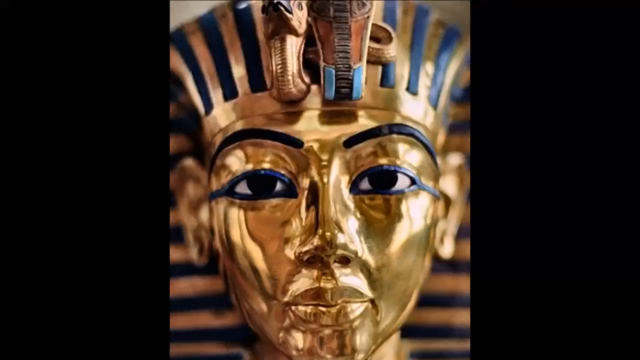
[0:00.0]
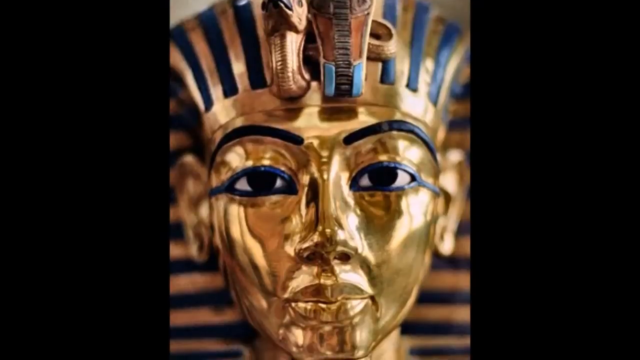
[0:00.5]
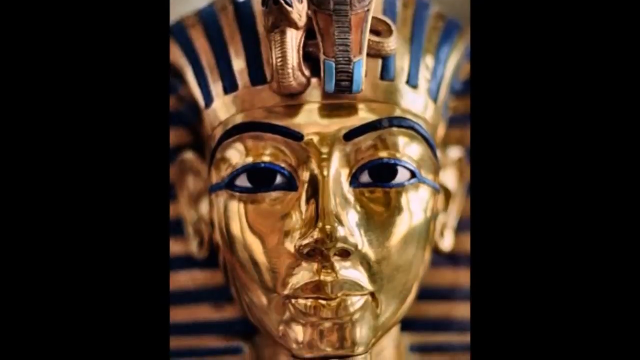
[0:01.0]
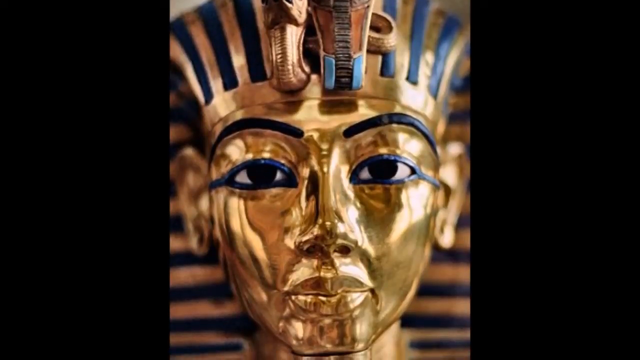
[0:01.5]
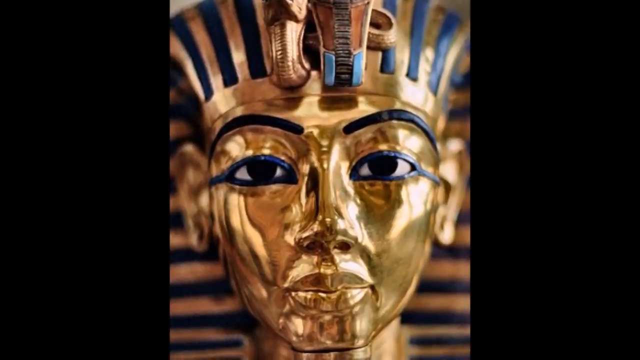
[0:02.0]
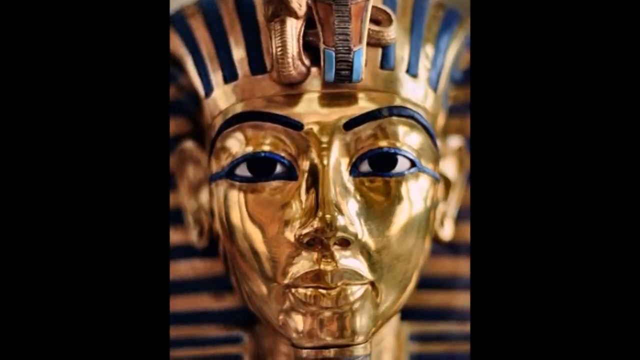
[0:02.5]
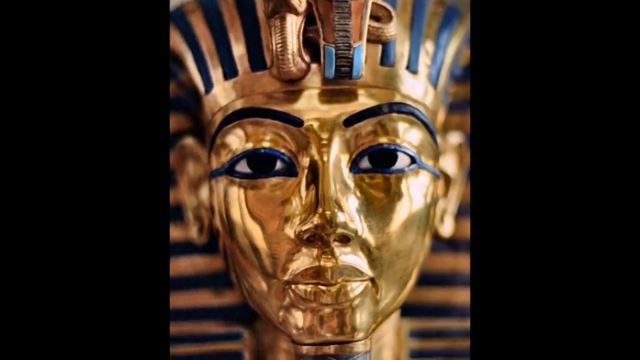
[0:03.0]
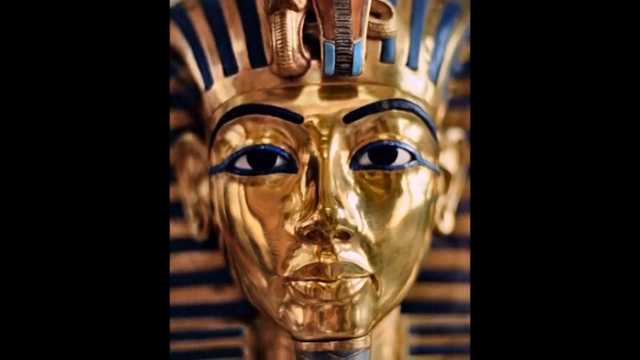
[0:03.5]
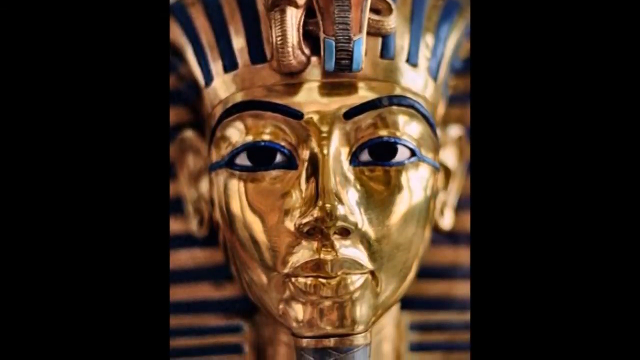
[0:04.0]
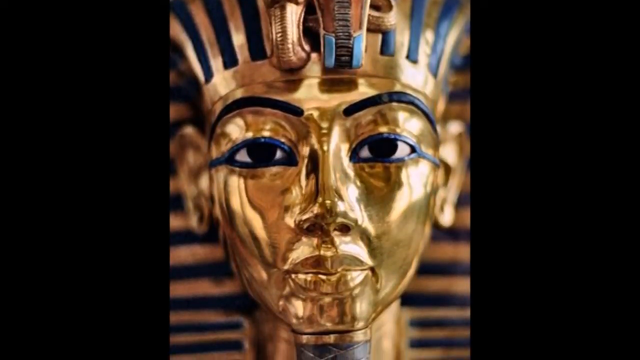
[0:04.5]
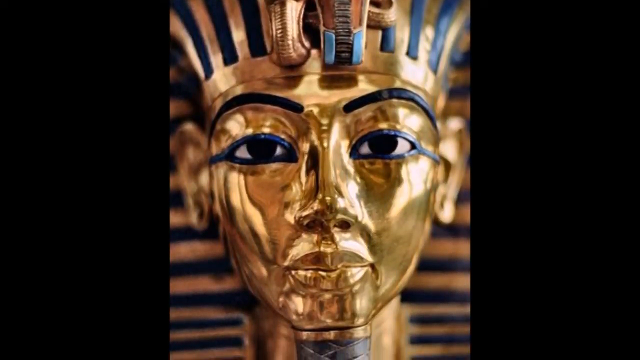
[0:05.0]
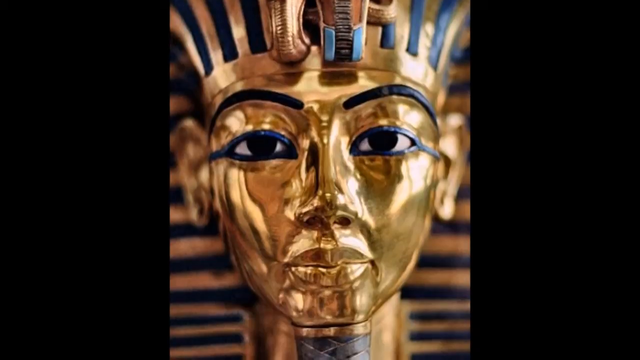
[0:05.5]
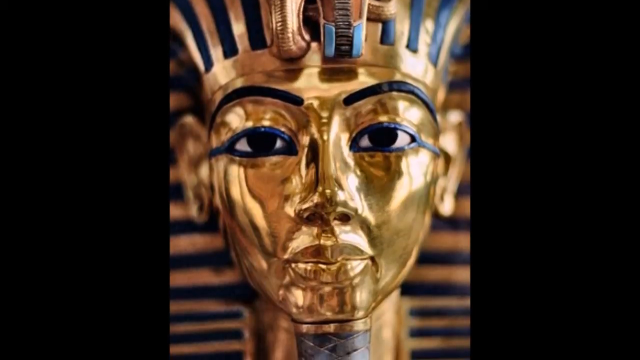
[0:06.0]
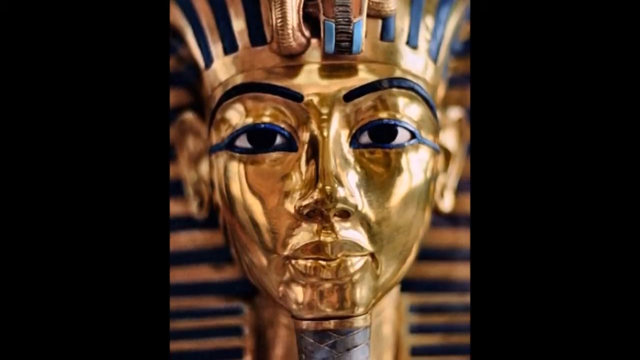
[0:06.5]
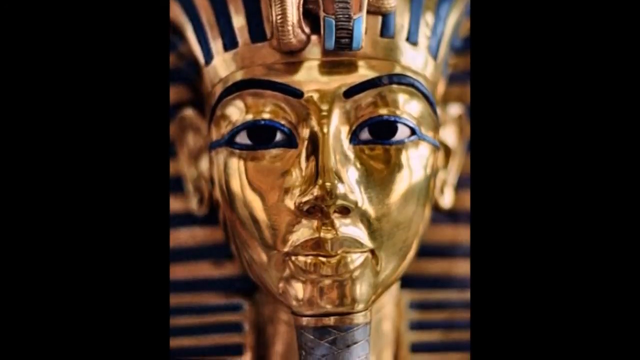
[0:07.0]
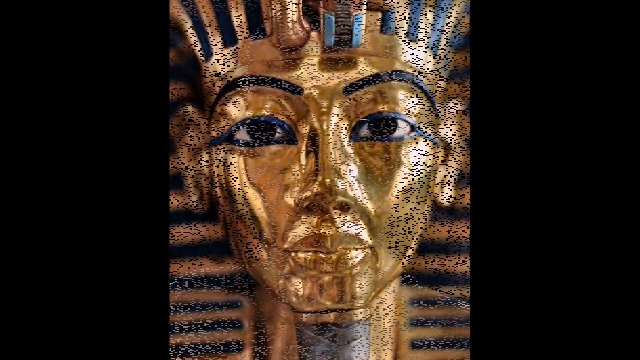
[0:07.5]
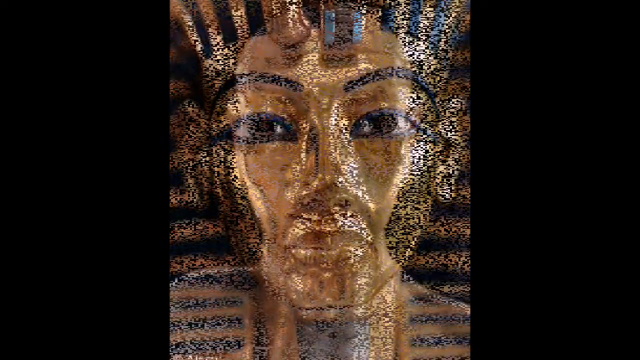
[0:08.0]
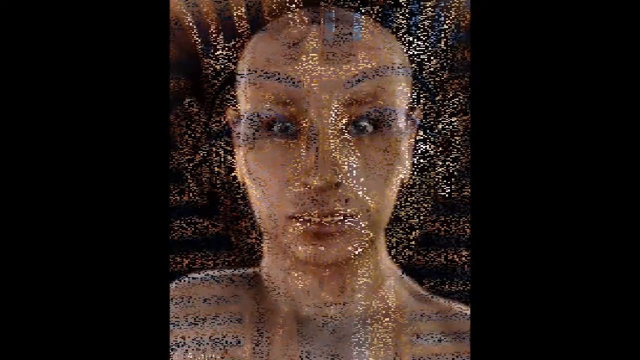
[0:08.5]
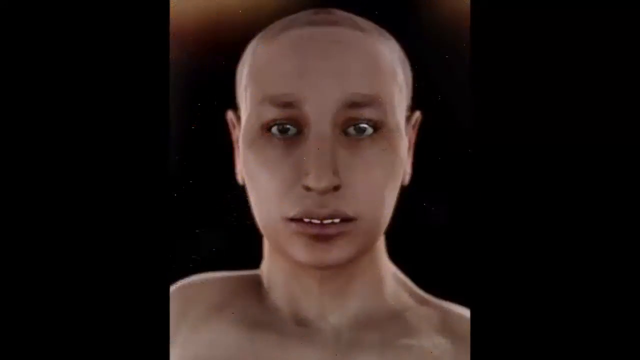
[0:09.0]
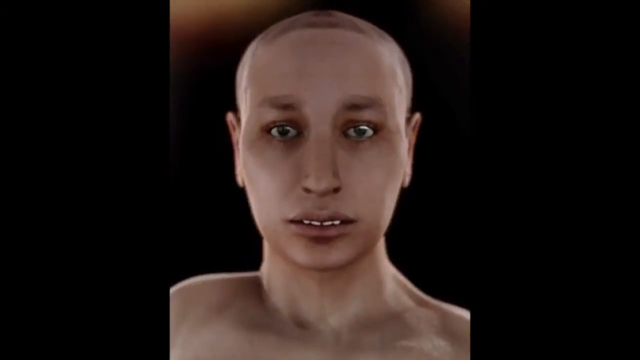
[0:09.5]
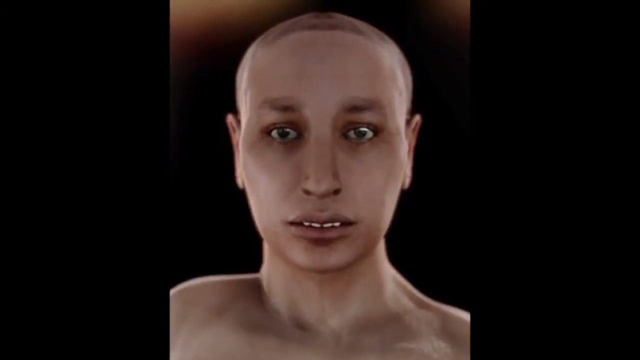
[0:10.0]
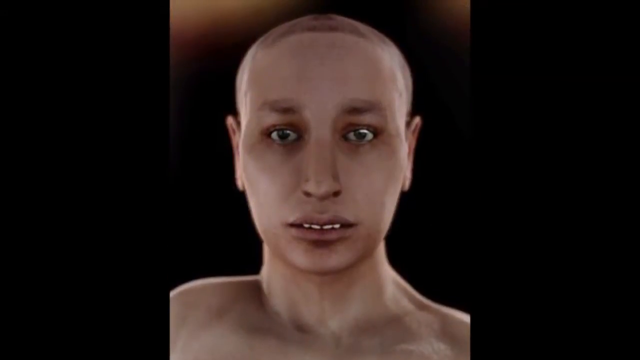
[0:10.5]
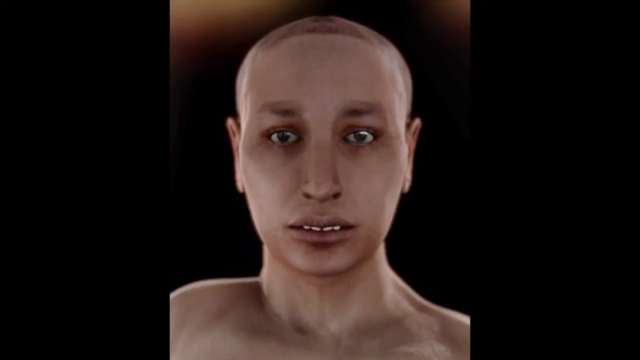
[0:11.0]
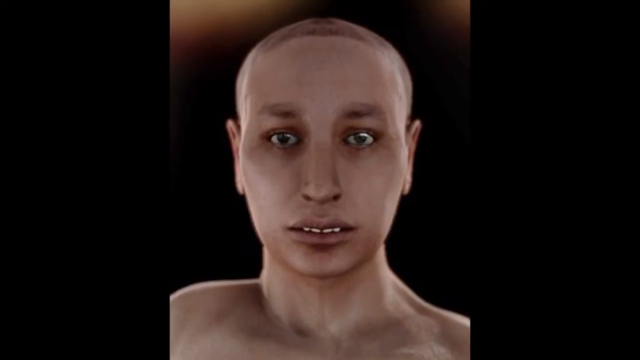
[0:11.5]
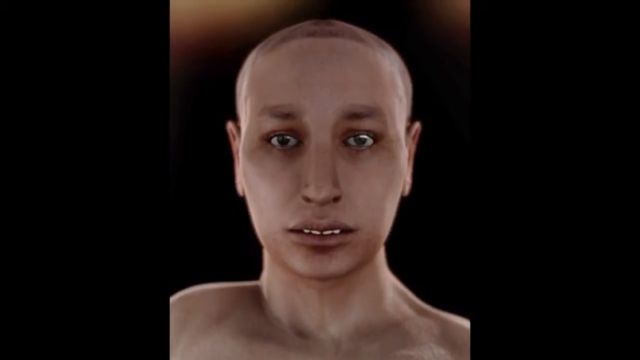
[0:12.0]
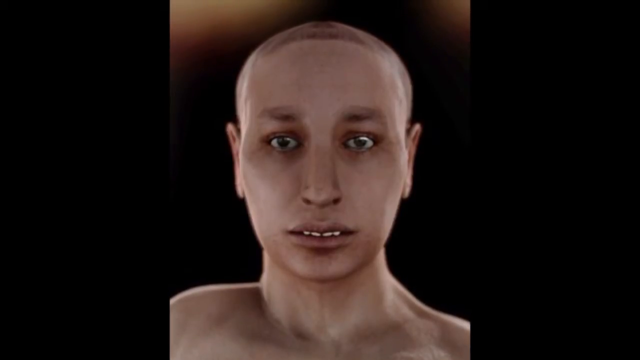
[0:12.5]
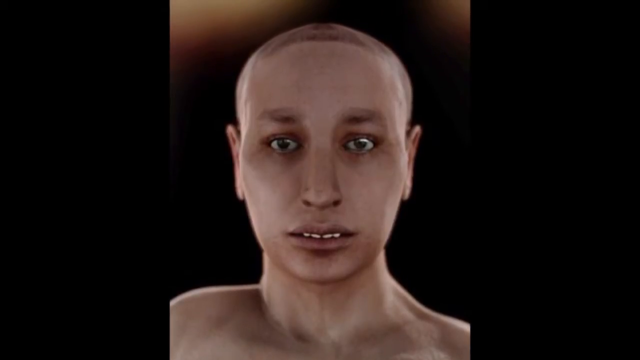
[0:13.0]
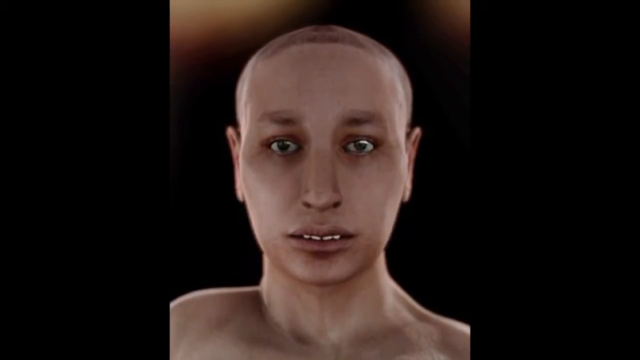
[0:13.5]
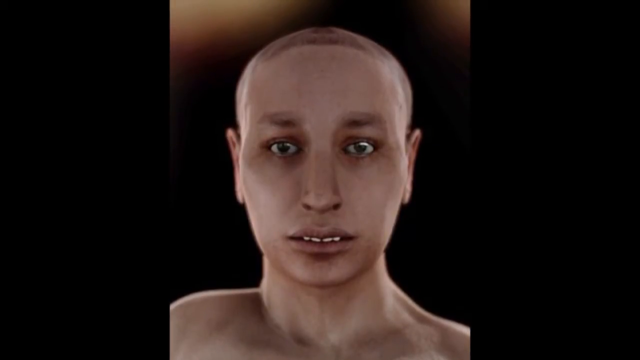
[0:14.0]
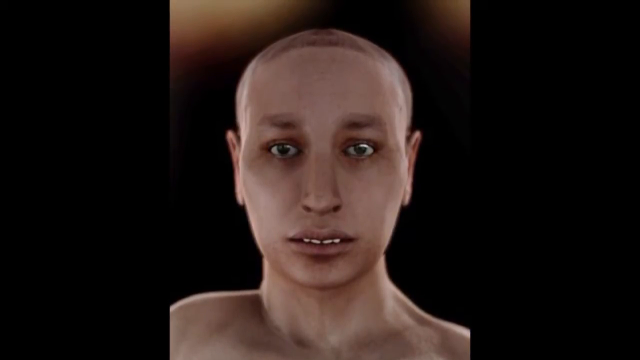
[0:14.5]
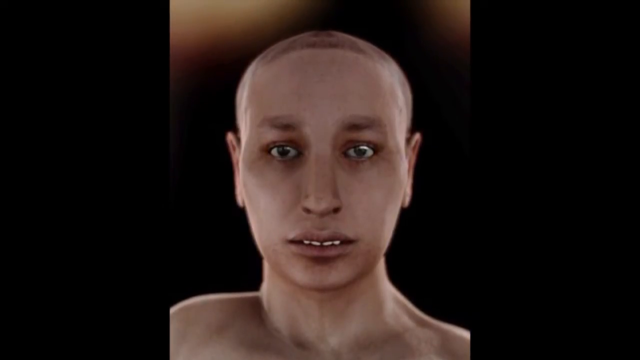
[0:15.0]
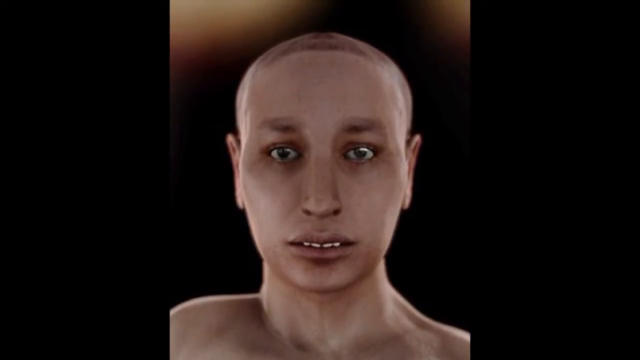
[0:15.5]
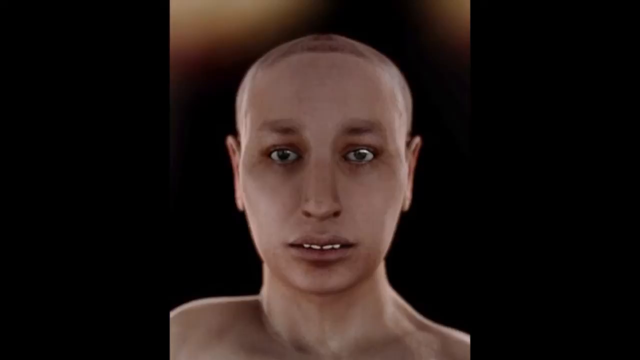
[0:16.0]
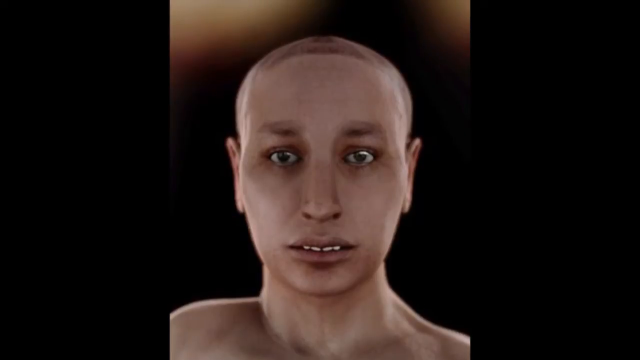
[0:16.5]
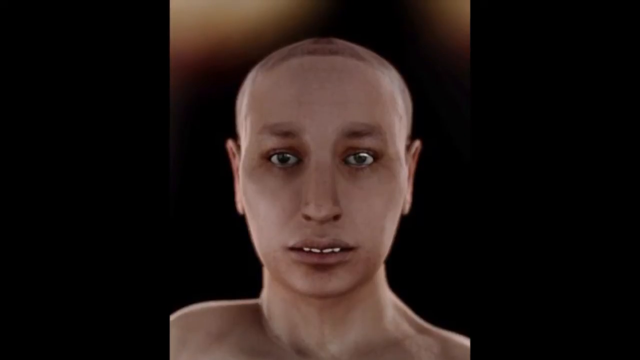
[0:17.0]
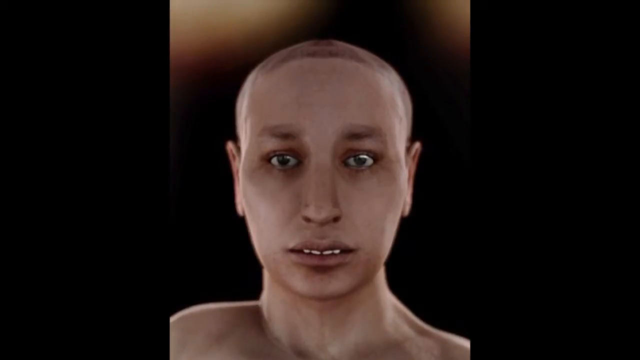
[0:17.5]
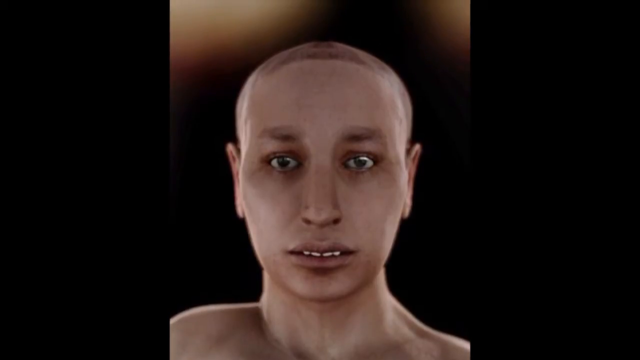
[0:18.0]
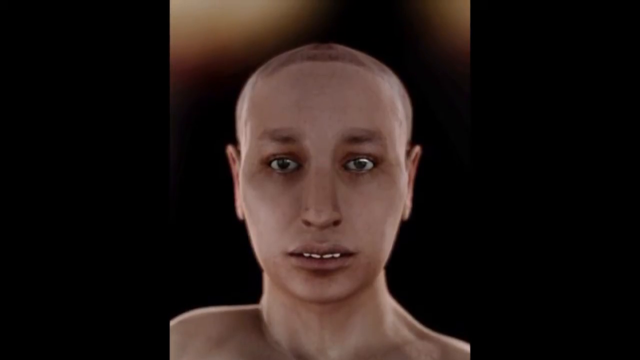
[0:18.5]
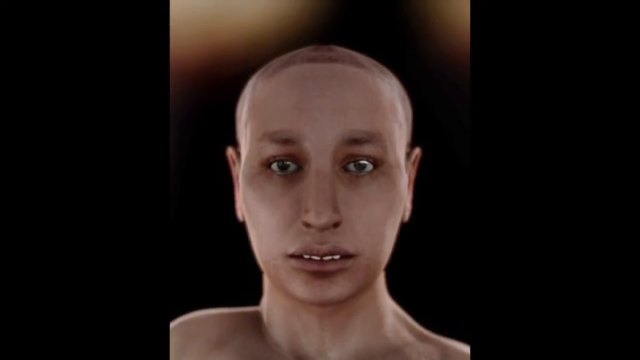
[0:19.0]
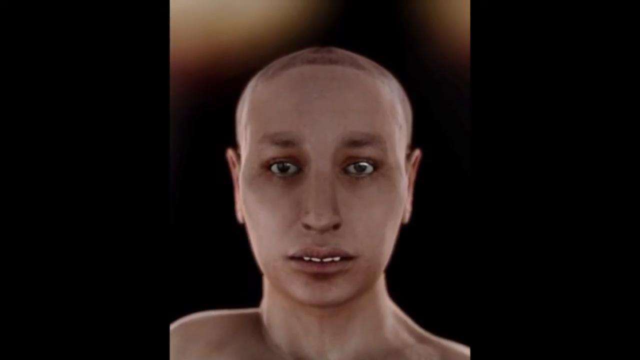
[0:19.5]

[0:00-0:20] The video opens on what looks like the face of the tomb of King Tutankhamen, or King Tut. The eyes have a blue highlight and the face looks very shiny. A snake that looks like a cobra is on the top of his head, and it is blue and gold striped. He has blue eyebrows. The video slowly pans downward, revealing his beard. It then transitions to a 3D animated picture of a face, apparently his real human face, looking at the viewer. The face is bald, with green eyes, and the mouth is slightly open, showing four teeth at the top. He apparently wears no clothes; only his shoulders up to his head are shown. The video slowly pans upward, looking up at him. The background is black with a little bit of white at the top left and top right. The face looks like that of a bald teenage kid with an almost fair skin tone.